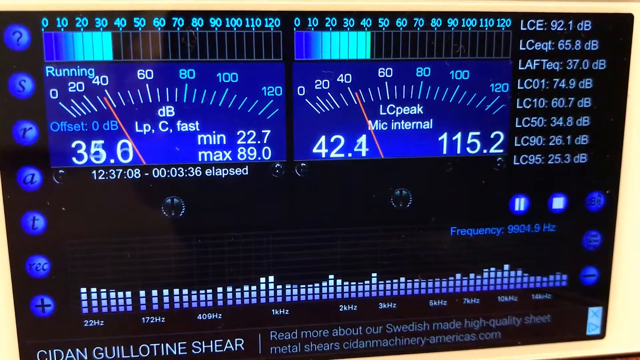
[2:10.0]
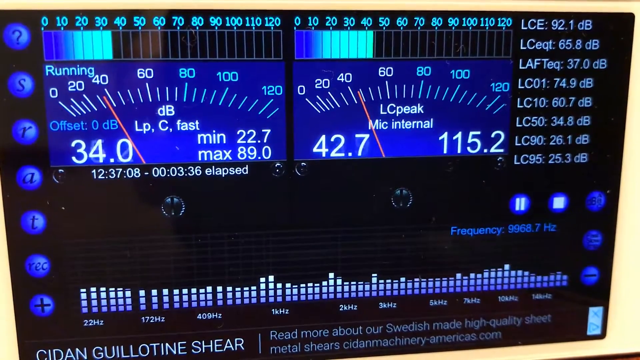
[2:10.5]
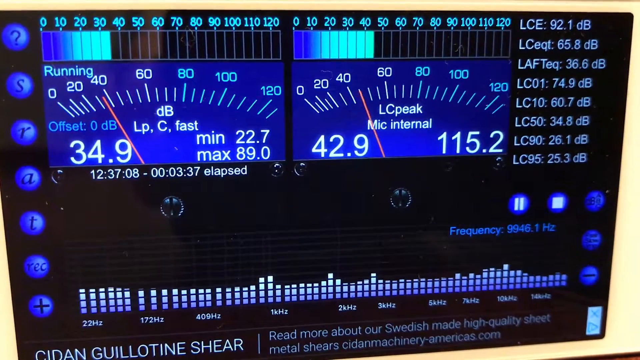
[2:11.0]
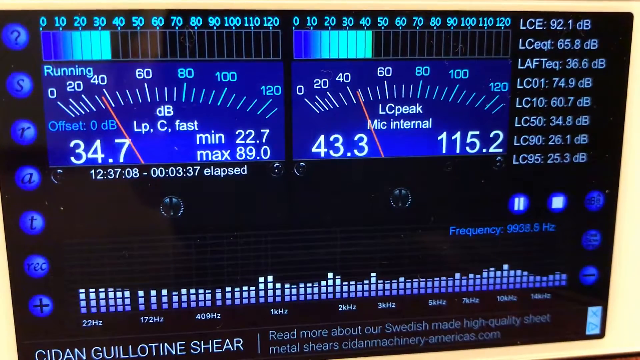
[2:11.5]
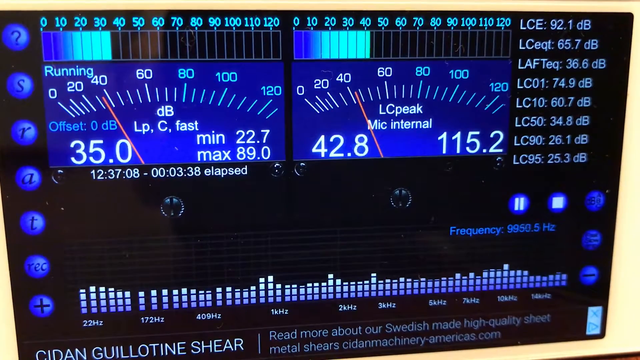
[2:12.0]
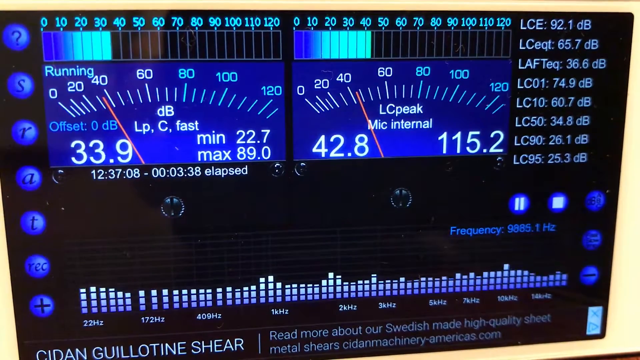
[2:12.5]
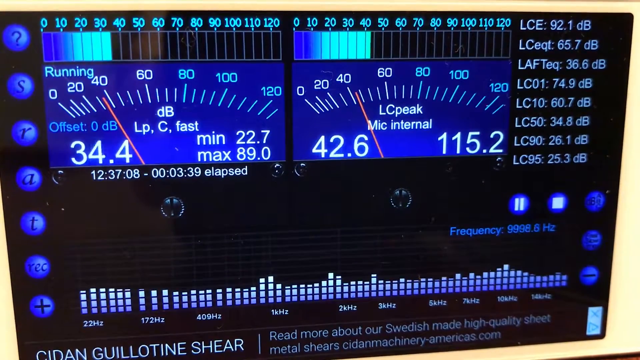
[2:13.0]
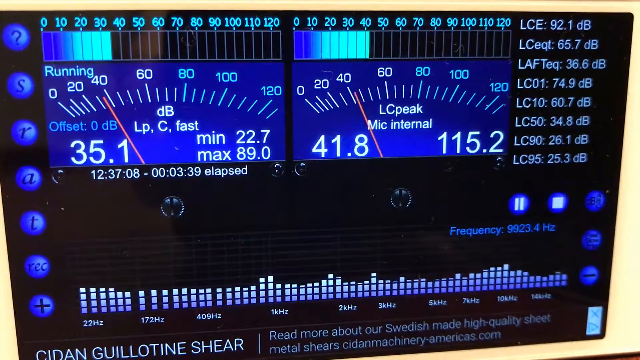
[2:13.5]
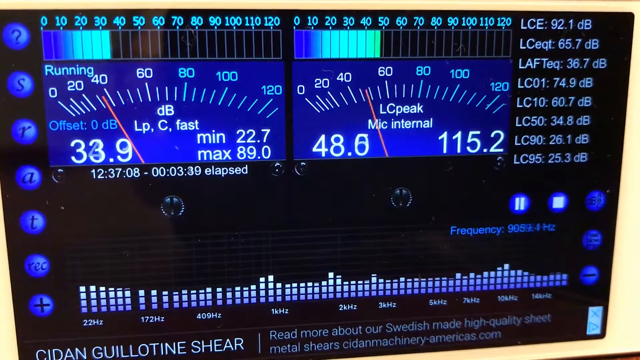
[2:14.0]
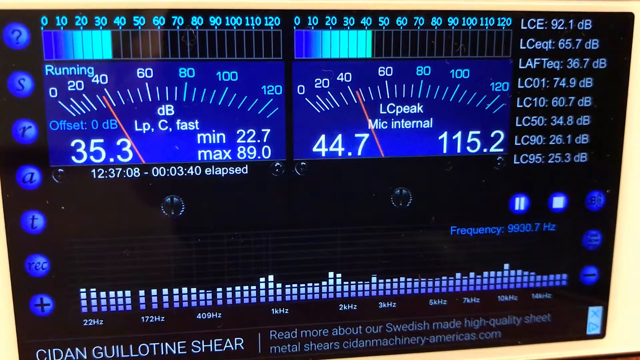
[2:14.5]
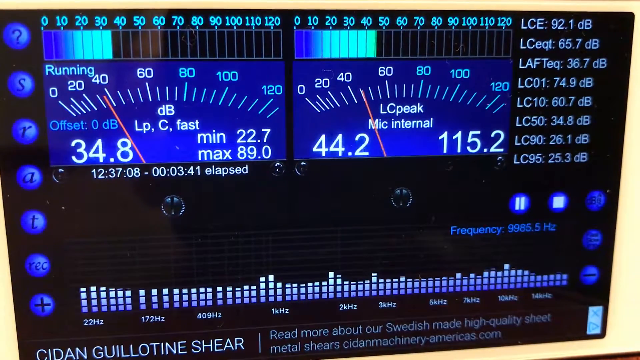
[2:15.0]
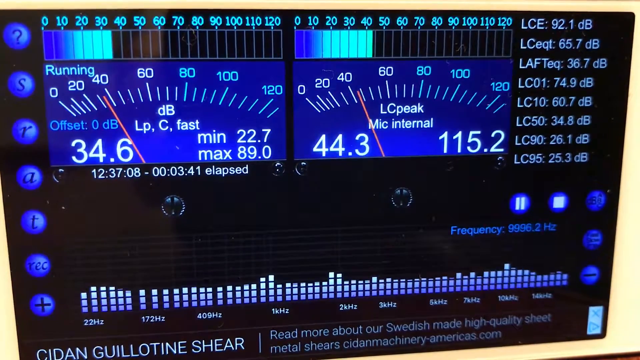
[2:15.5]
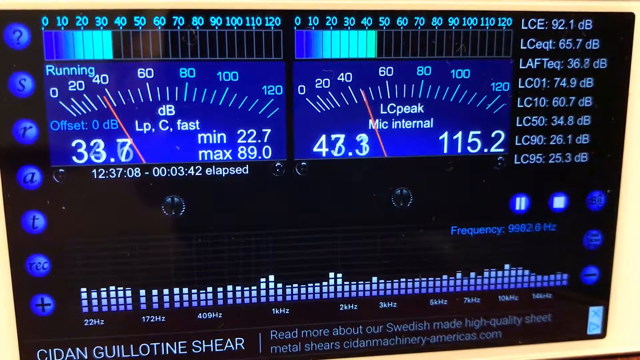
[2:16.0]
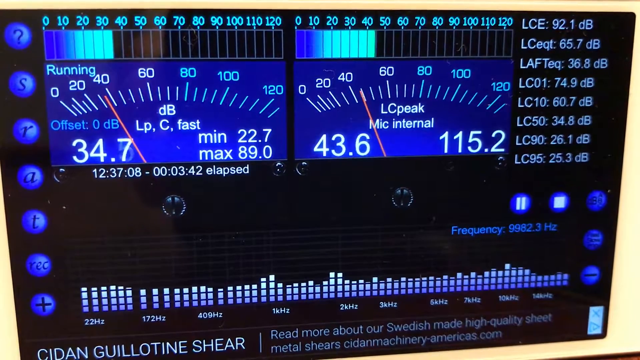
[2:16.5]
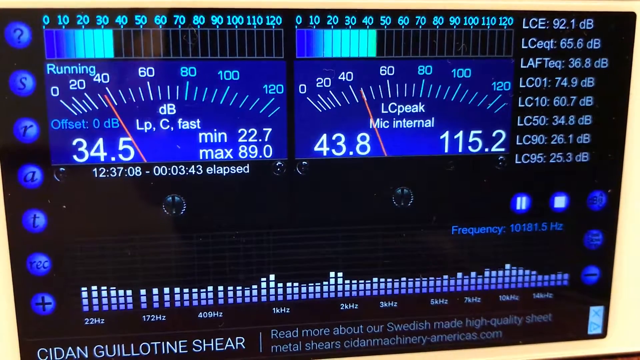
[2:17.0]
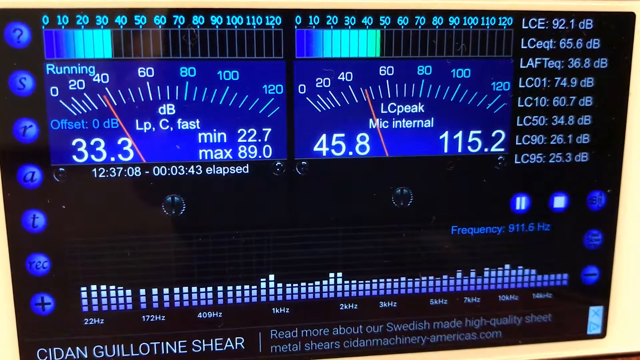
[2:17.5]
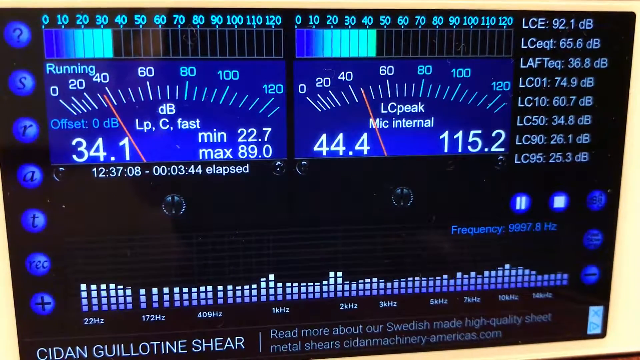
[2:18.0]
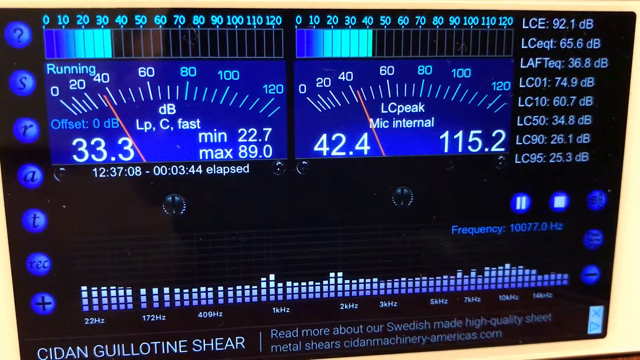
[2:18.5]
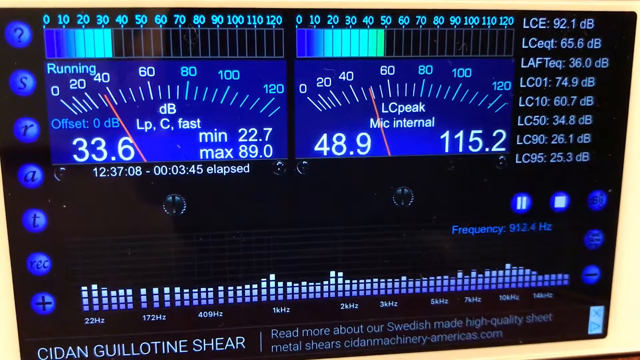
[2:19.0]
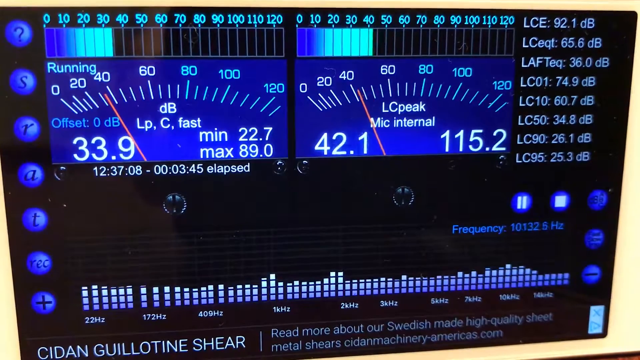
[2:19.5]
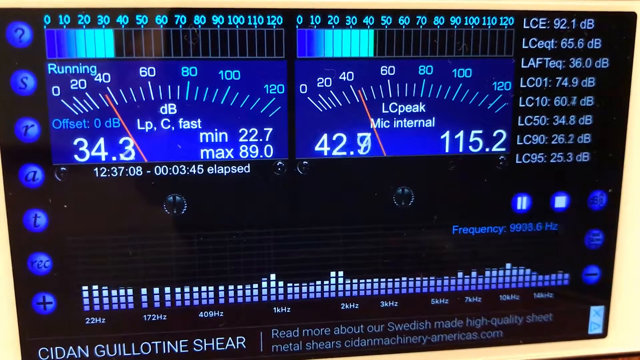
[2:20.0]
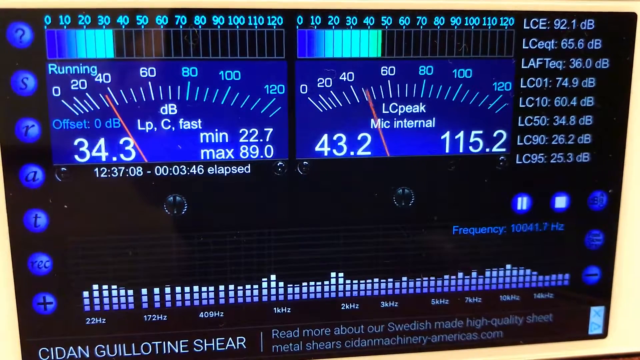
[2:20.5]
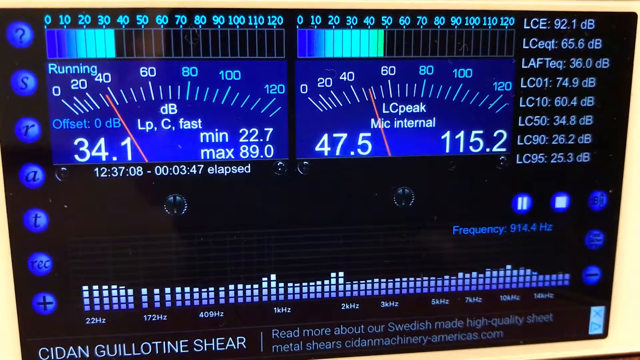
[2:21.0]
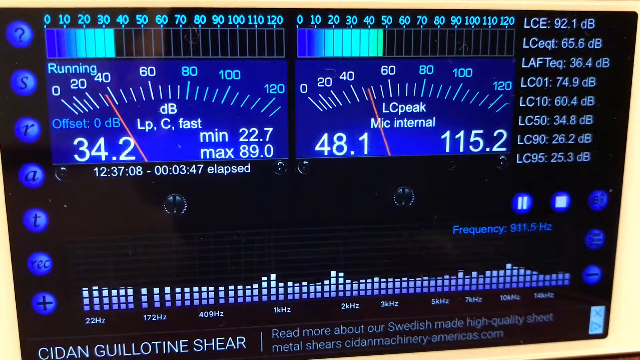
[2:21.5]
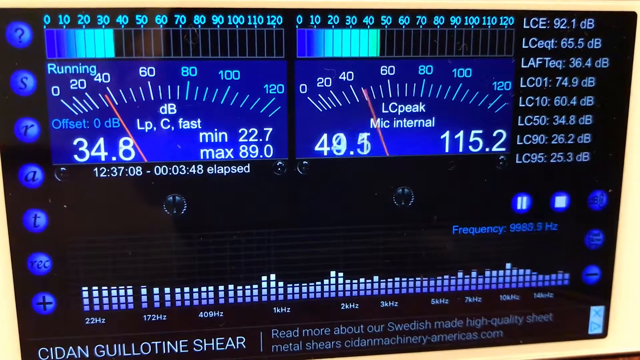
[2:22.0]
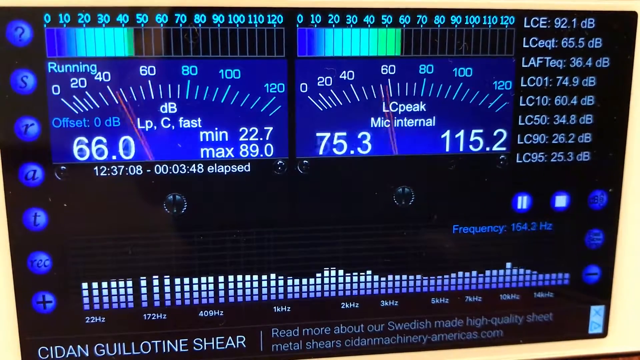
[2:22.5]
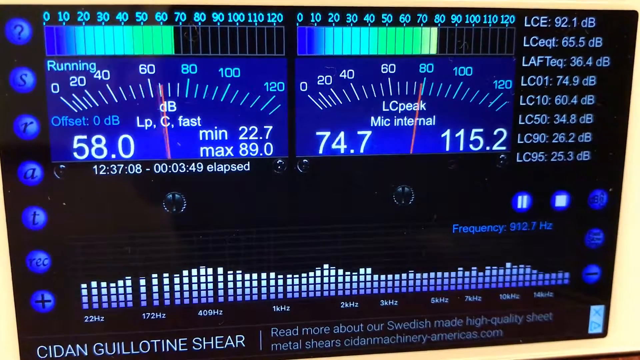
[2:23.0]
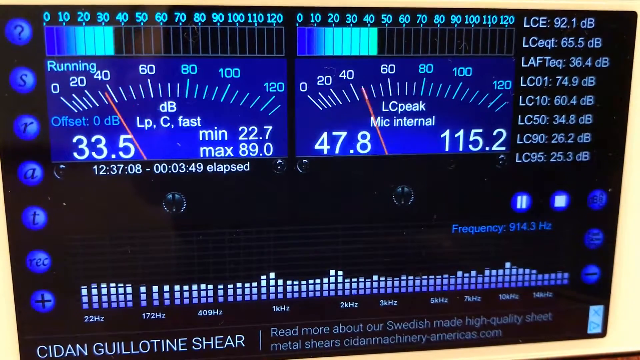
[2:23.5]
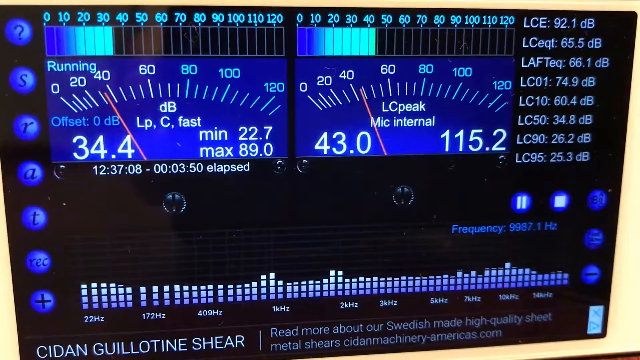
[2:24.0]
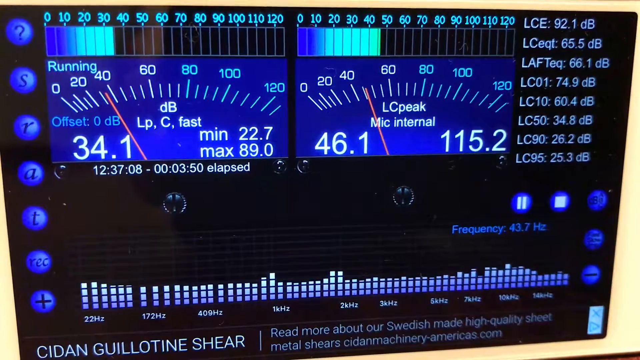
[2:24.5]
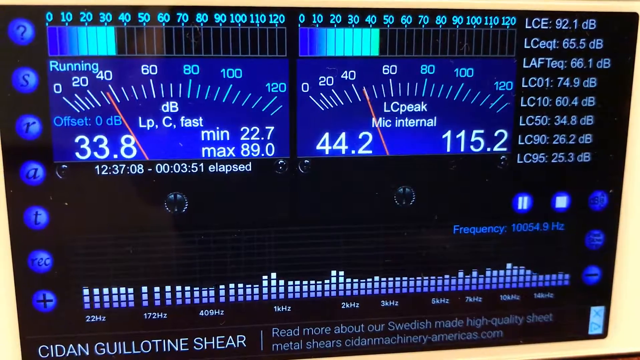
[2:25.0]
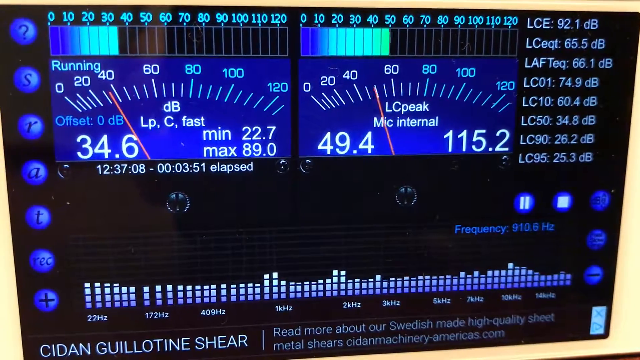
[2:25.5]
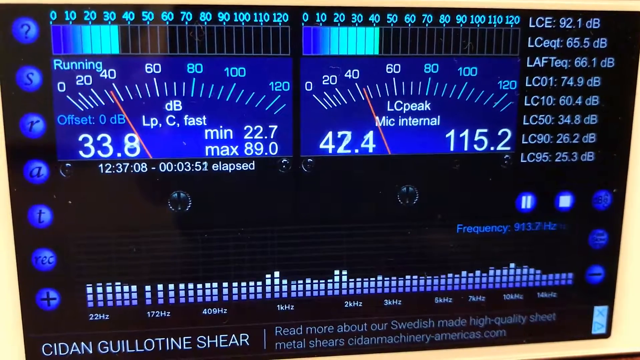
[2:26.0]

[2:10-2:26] An extreme close-up shows the app on the white iPhone, used to measure decibels of a song and whether the mic will peak. The app is black with blue highlights on the gauges and blue icons. It is apparently listening to music: the gauges bounce up and down, the bars across the top move and peak, and the elapsed time is shown. On the right-hand side are decibel readings for different parts of the song, a stop button, a pause button, and three other blue icons. The frequency reads 918.5 hertz. On the left-hand side are more blue buttons, one appearing to be a help section and another like a recording section.